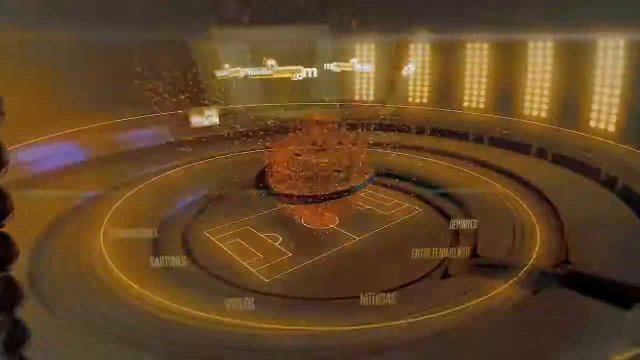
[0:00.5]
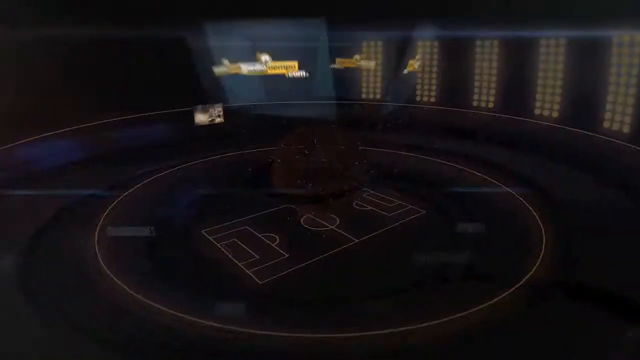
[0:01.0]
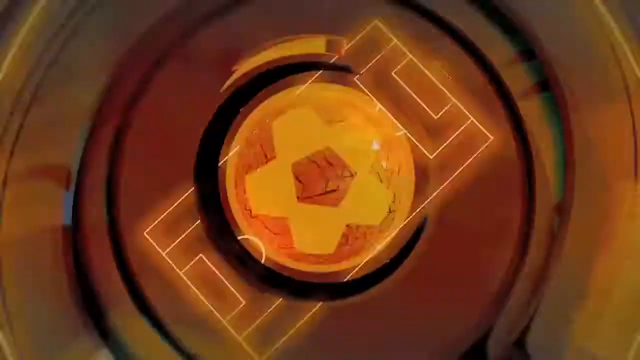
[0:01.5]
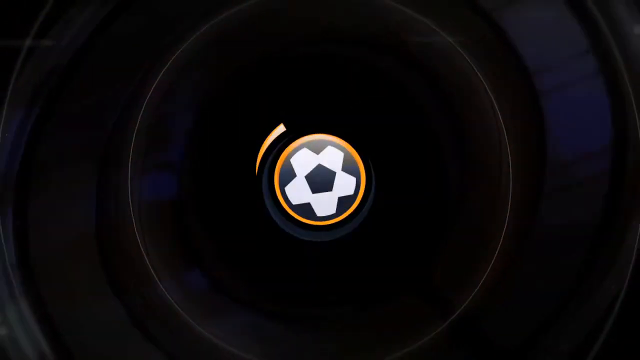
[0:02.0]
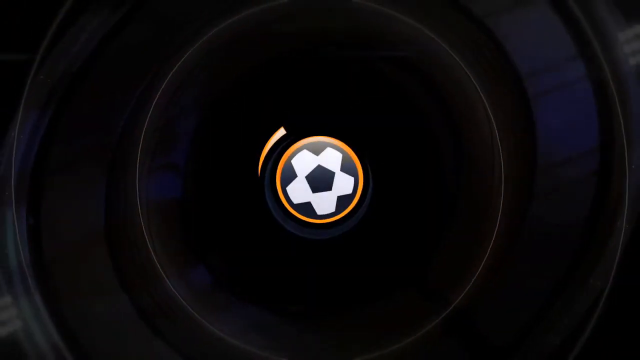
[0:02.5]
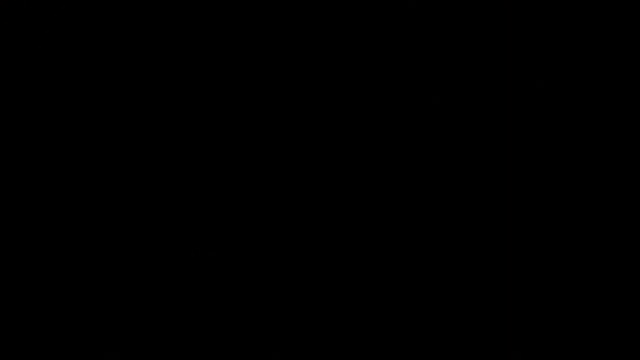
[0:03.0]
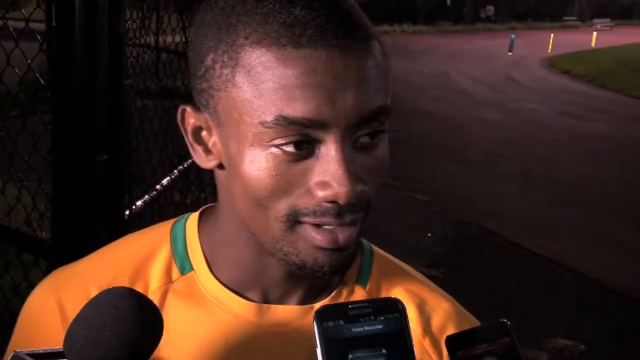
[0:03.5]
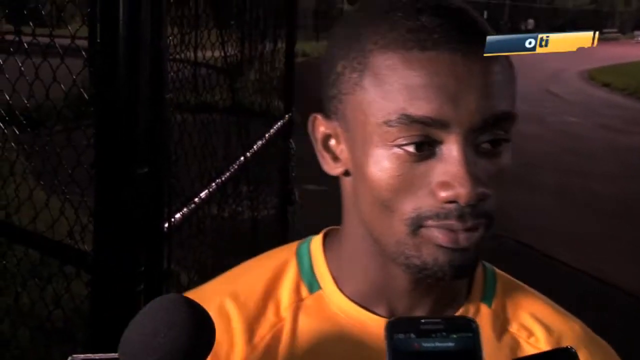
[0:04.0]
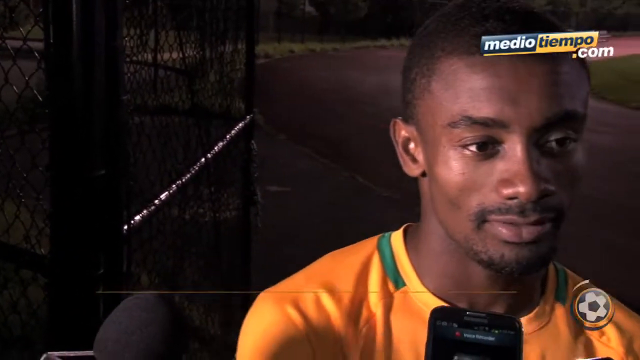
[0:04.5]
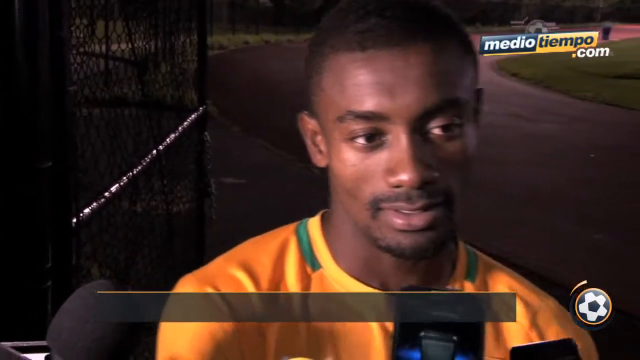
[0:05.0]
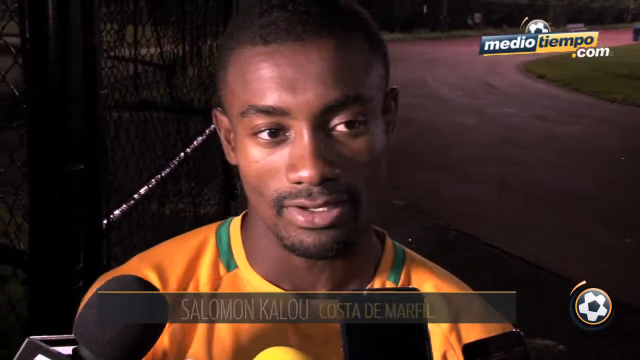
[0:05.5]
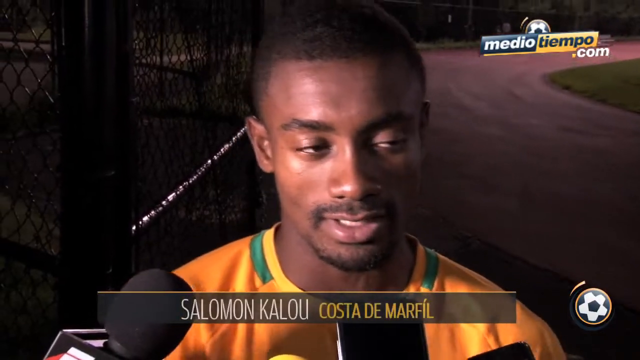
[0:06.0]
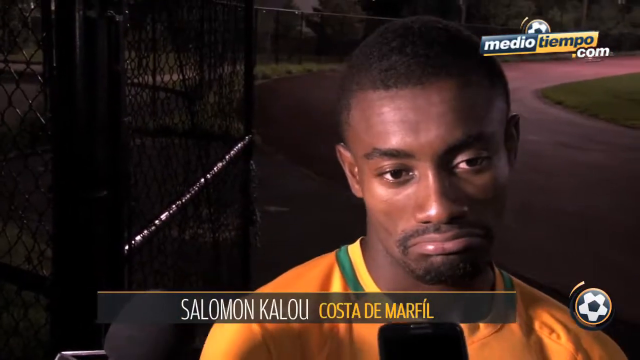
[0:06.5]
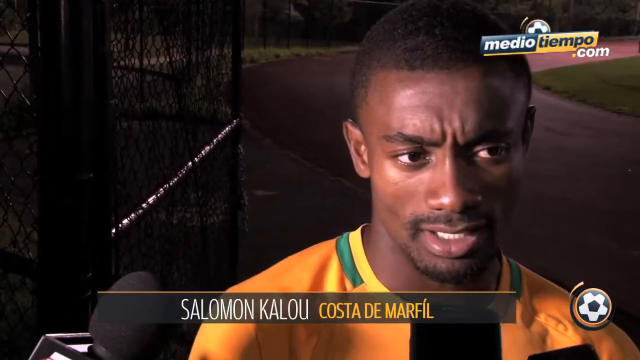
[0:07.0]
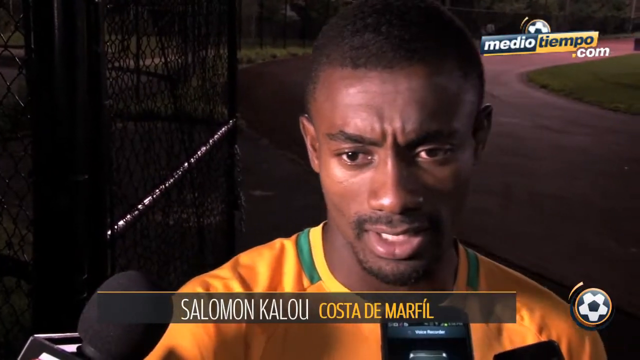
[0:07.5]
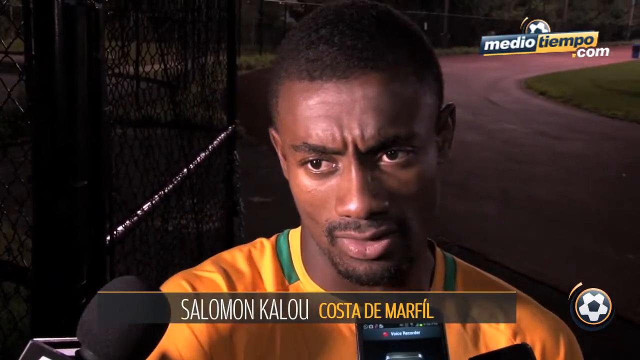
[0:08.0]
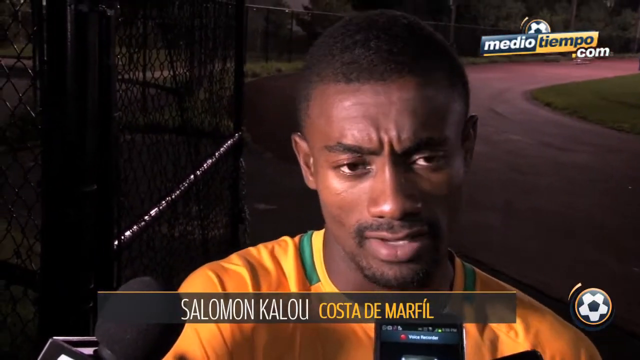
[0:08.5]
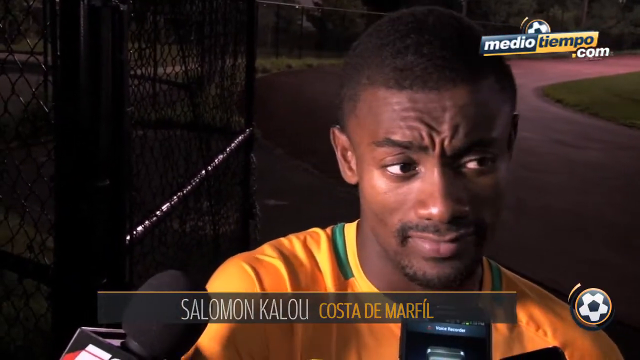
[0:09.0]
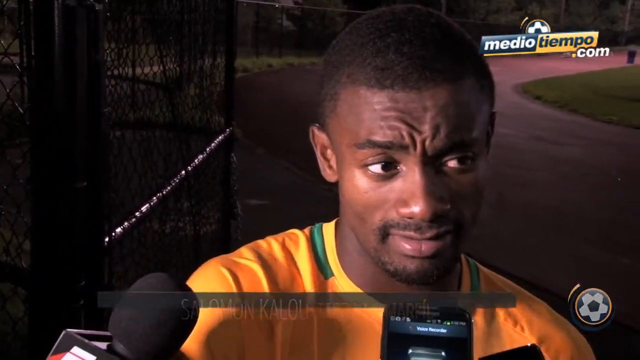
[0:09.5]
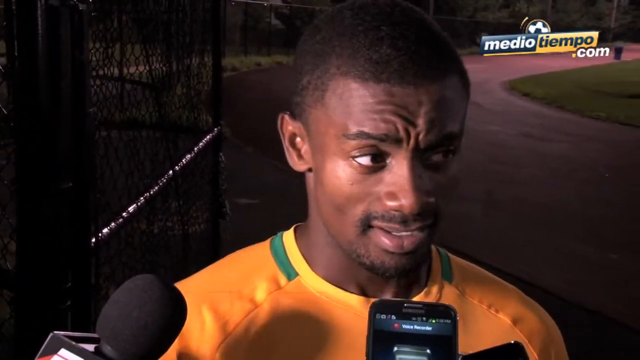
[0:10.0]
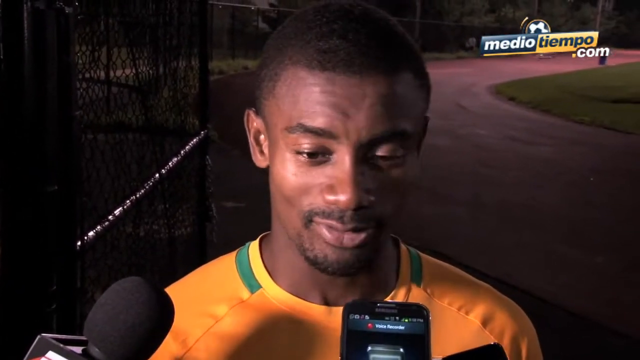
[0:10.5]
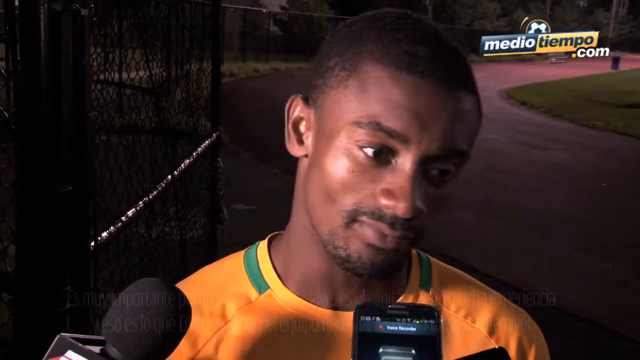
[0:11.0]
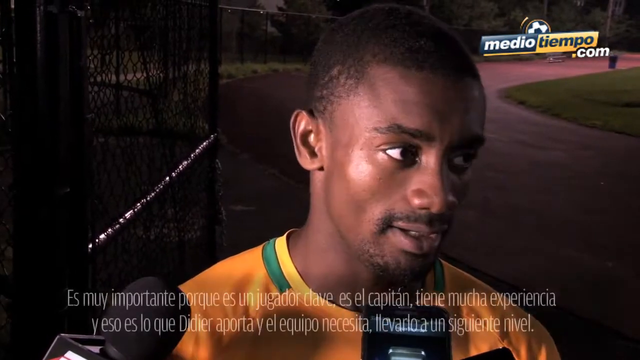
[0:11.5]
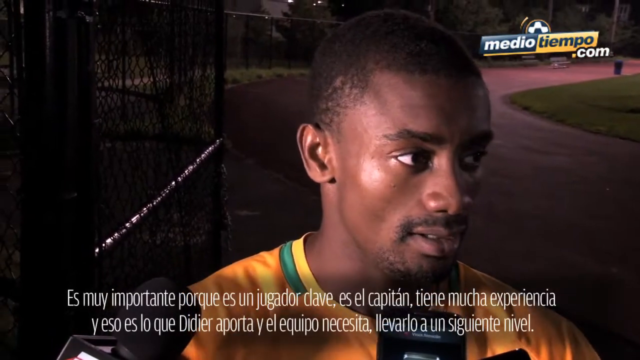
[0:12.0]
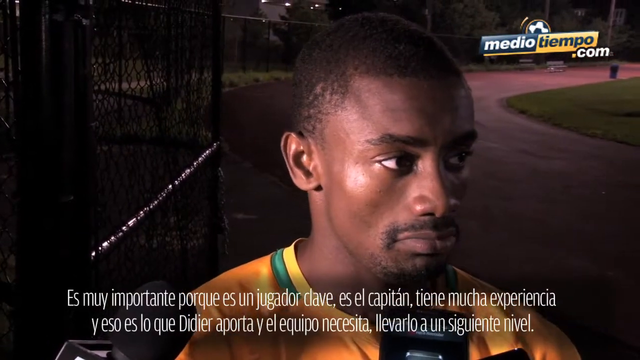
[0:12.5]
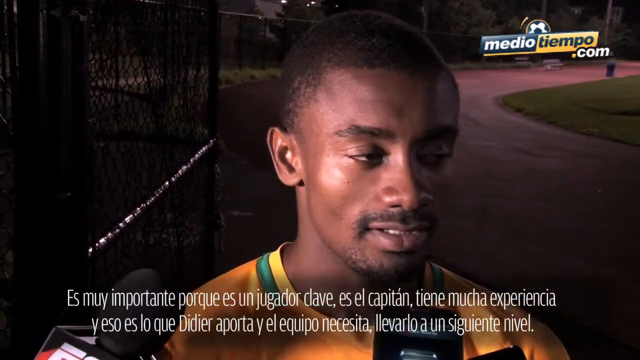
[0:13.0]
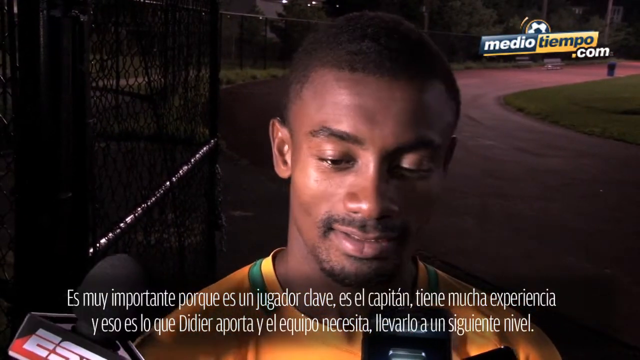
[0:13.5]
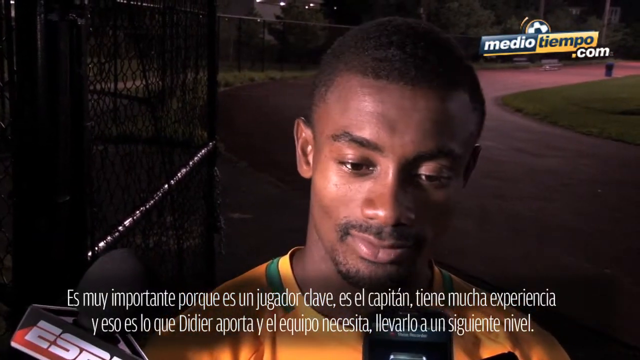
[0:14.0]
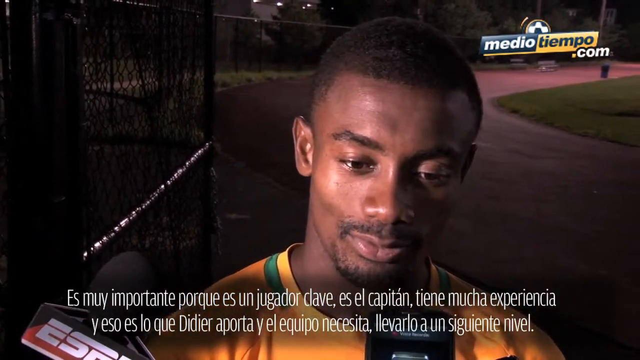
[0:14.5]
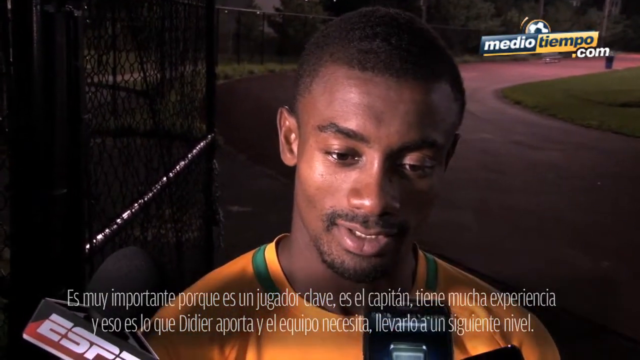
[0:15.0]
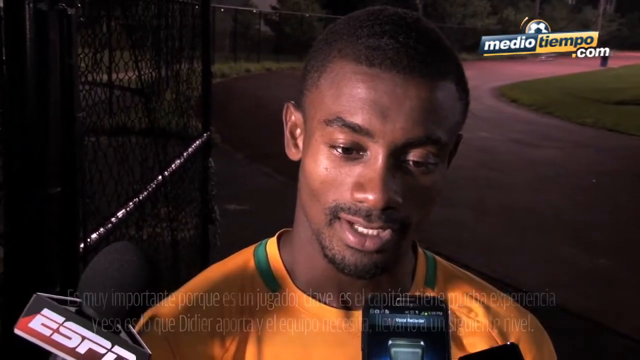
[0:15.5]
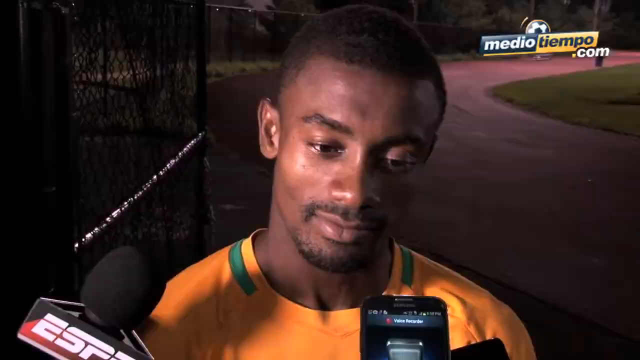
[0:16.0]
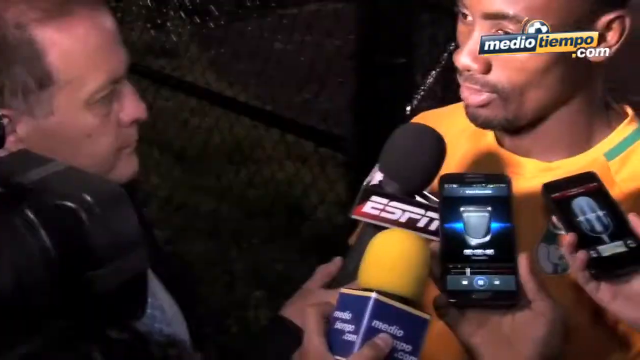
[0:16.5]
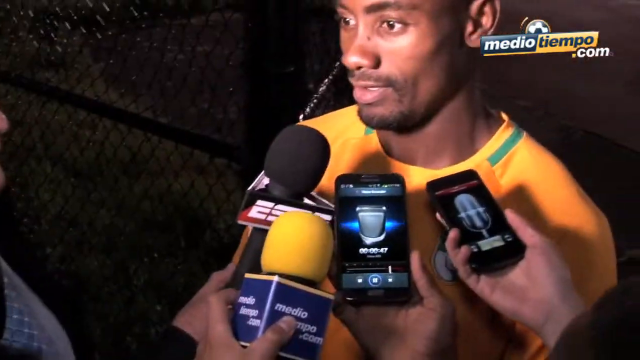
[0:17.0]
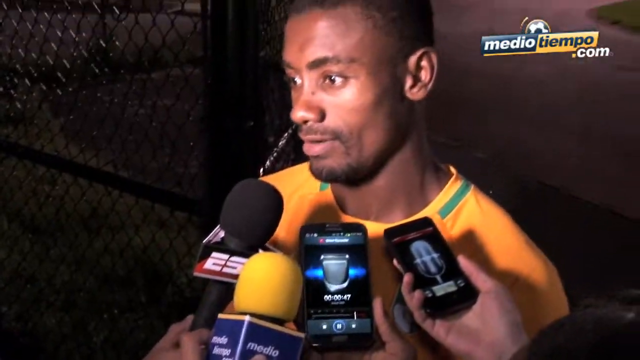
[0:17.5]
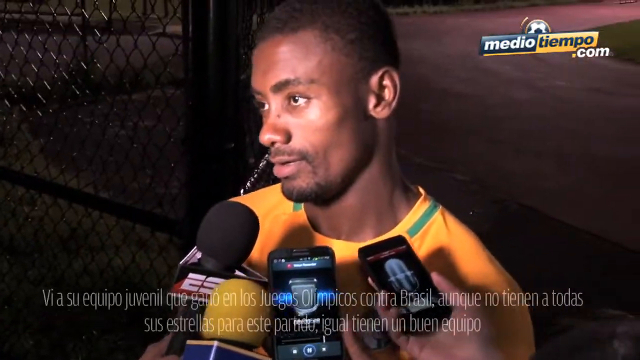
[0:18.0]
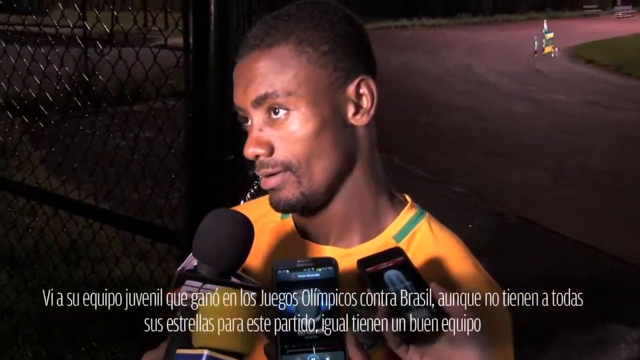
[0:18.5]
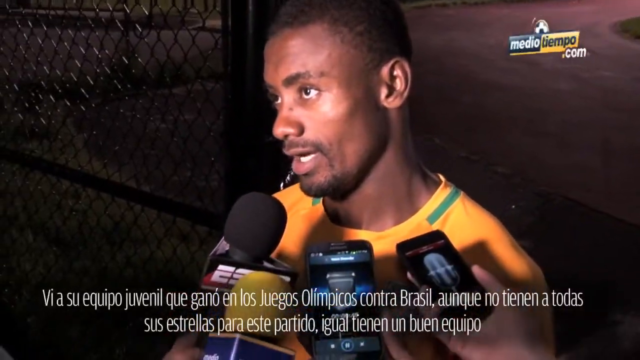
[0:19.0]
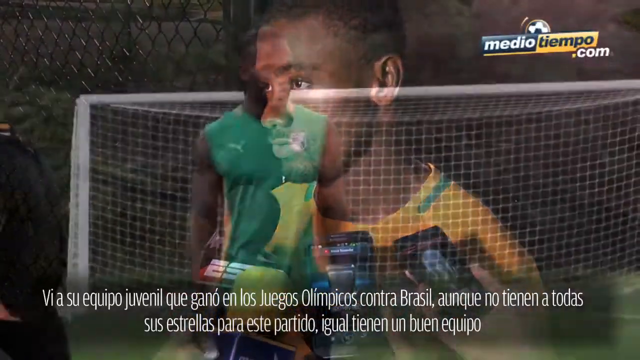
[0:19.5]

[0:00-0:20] The video has some quick cuts. It opens with an intro, then cuts to a man speaking to a camera, shown from the top of the chest up. What looks like a telephone and a microphone are in front of him: the microphone is on the left-hand side, and the phone is directly in front of the man, more toward the right-hand side. His eyes are directed almost in front of him but slanted a little to the right. He has short black hair and a goatee. The shot is at night, with darkness in the background. As the video continues, the man kind of sways to the right and to the left, and his gaze also shifts to the left and to the right.